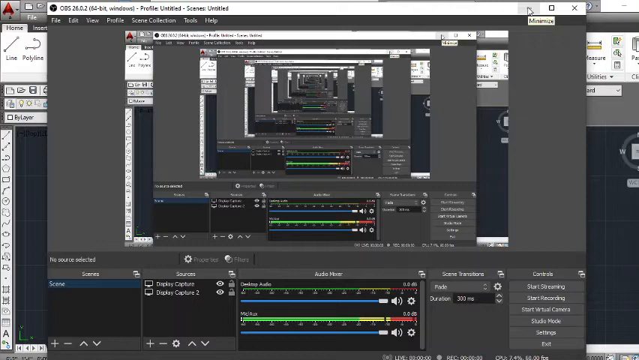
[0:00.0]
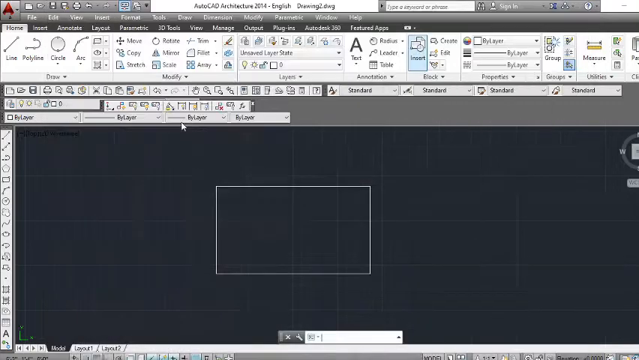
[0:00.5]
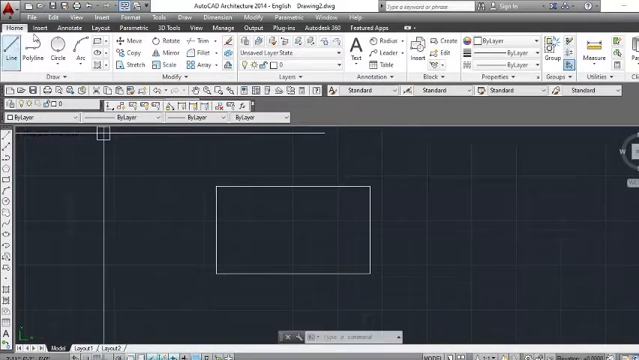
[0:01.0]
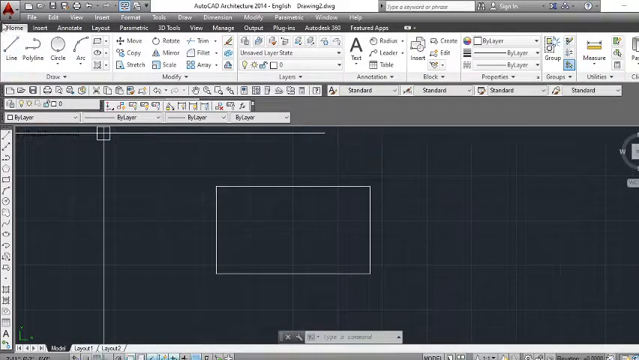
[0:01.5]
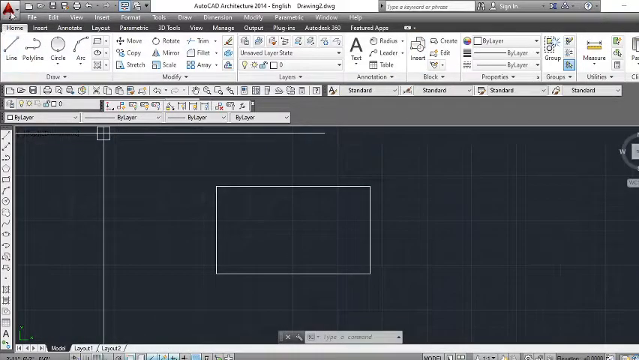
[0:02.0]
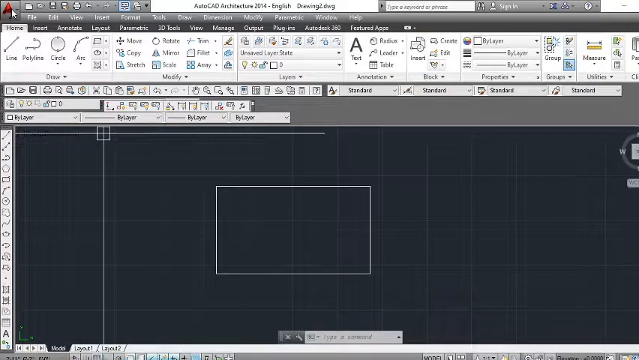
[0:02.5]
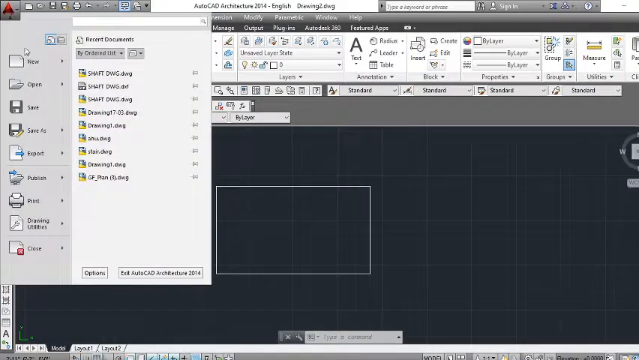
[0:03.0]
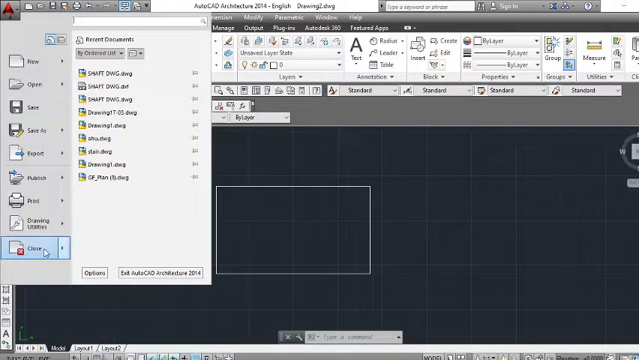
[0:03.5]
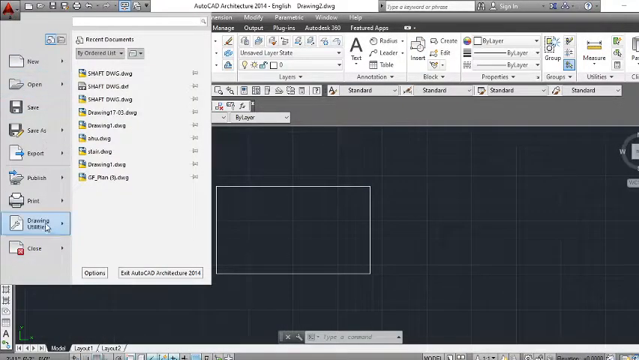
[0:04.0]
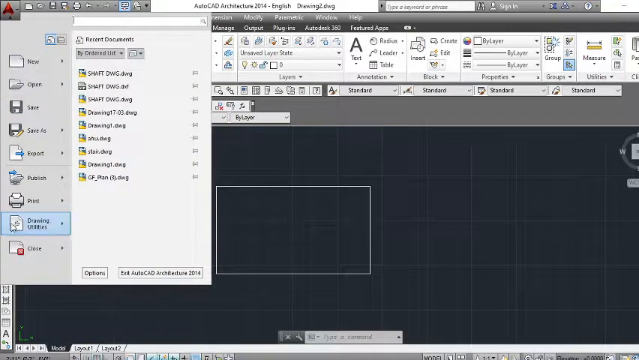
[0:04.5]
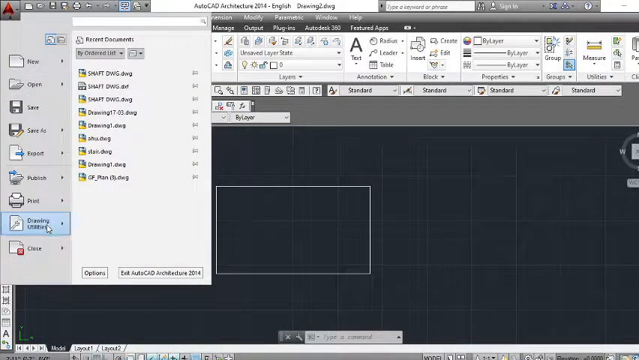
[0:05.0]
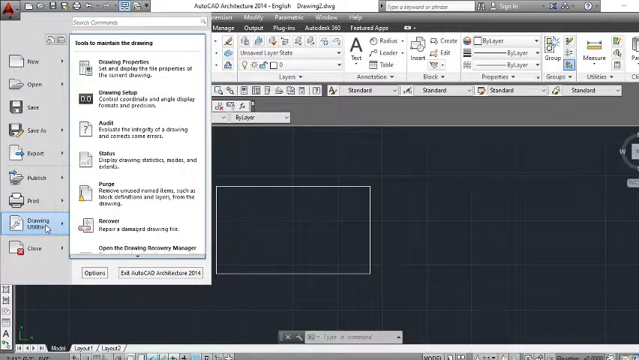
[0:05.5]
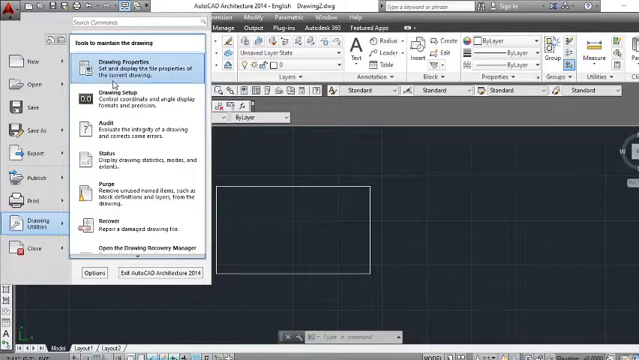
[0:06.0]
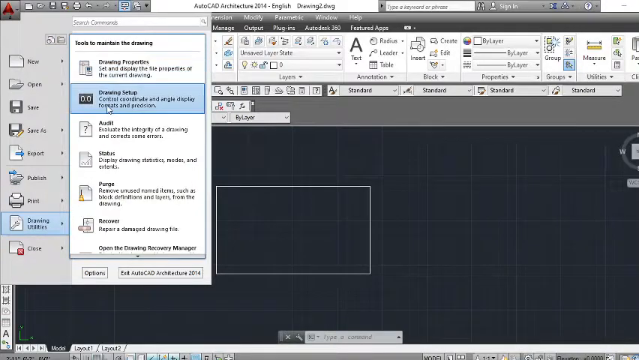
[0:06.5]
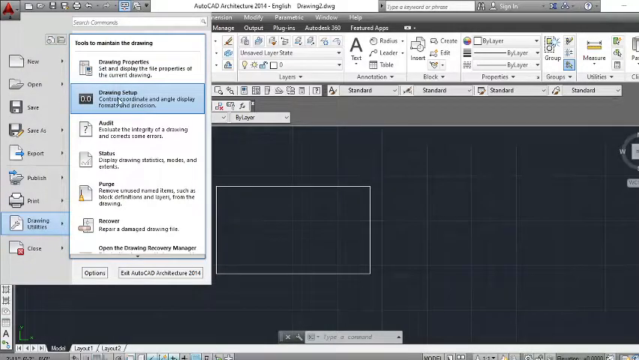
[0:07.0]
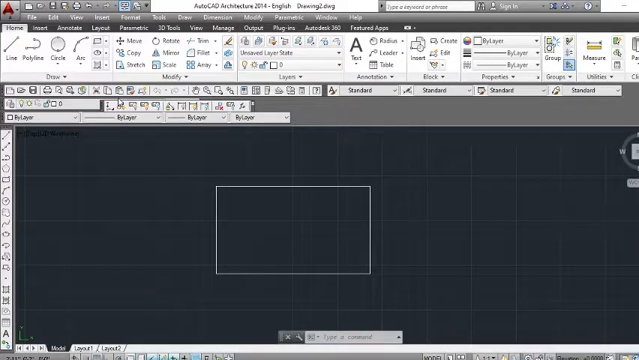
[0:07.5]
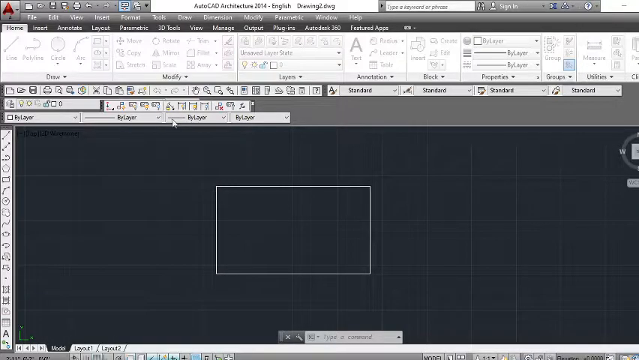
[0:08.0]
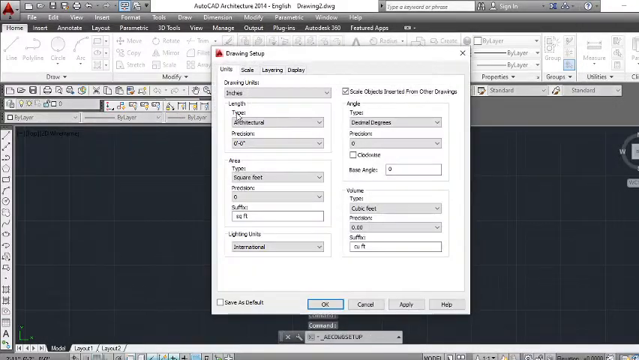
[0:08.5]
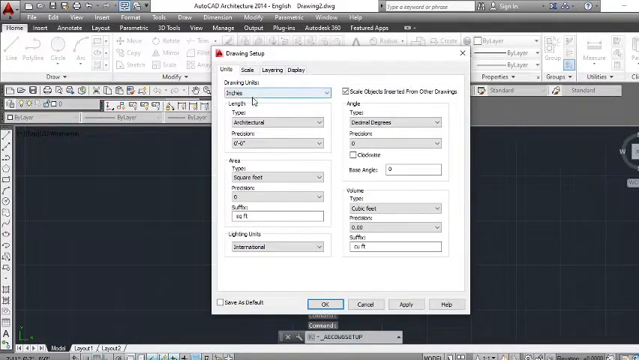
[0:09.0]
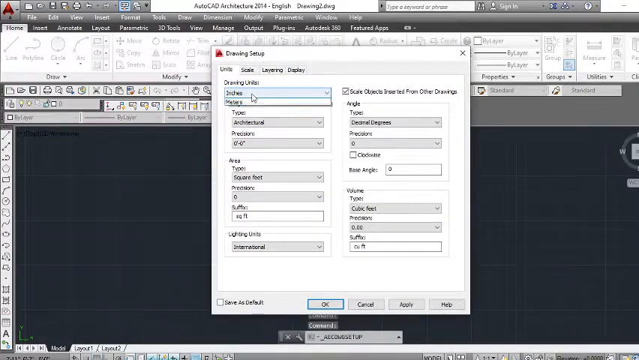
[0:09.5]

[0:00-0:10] A computer monitor shows an image that is mirrored, like one mirror held in front of another, with reflections repeating endlessly. That closes, and the cursor clicks near the top left of the screen. It clicks on something and a drop-down menu opens, clicks on something and another drop-down menu opens, then clicks on something else. After everything is closed, the screen returns to the image it started with.